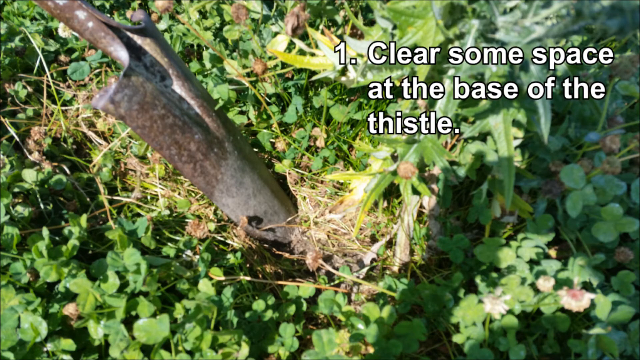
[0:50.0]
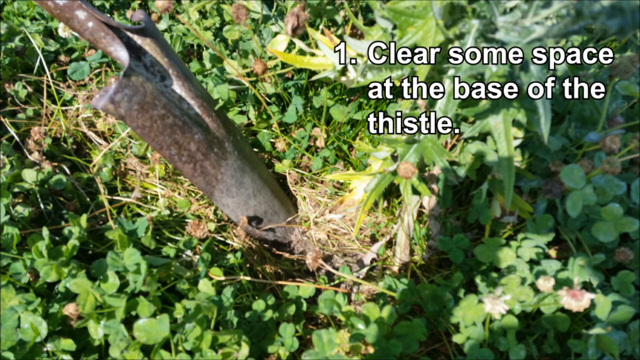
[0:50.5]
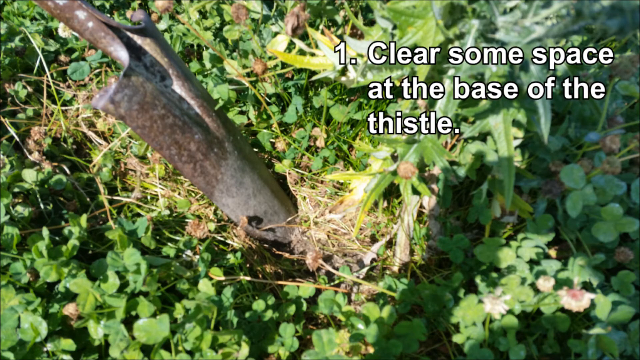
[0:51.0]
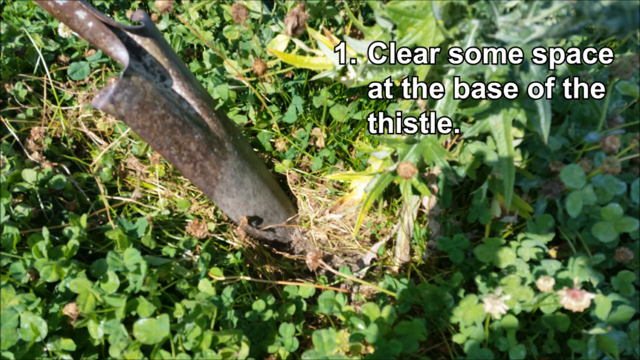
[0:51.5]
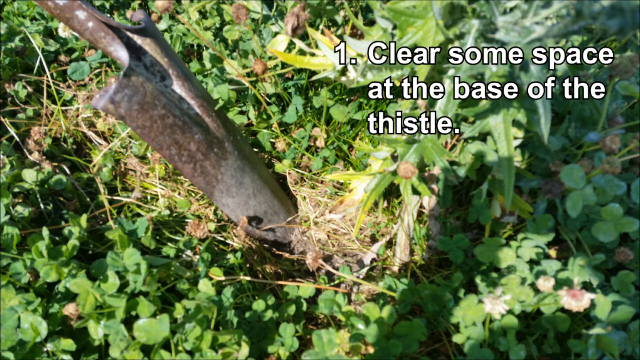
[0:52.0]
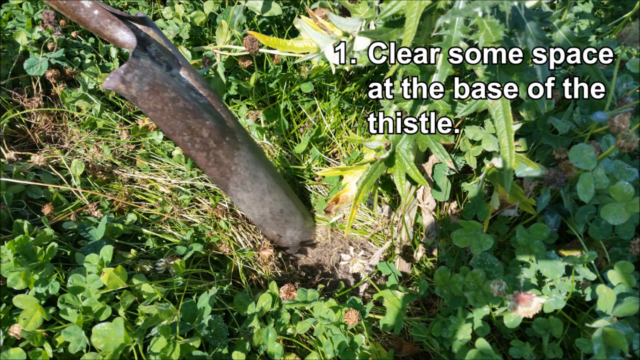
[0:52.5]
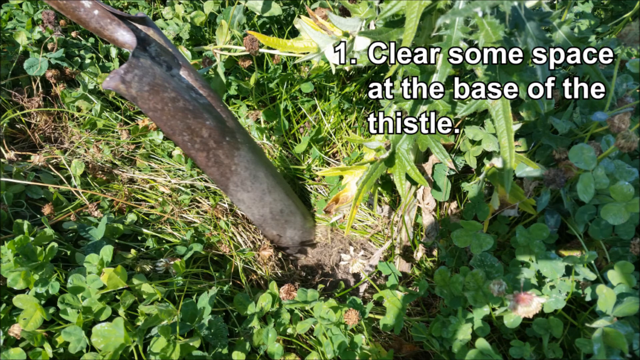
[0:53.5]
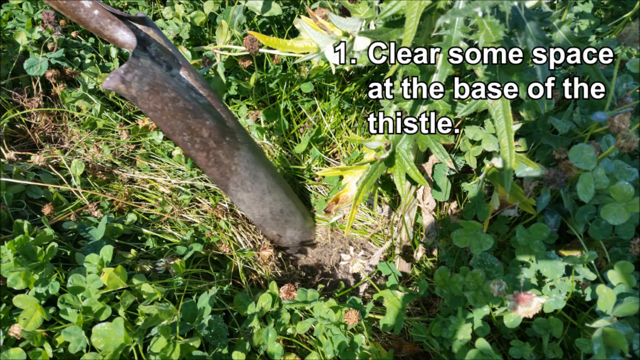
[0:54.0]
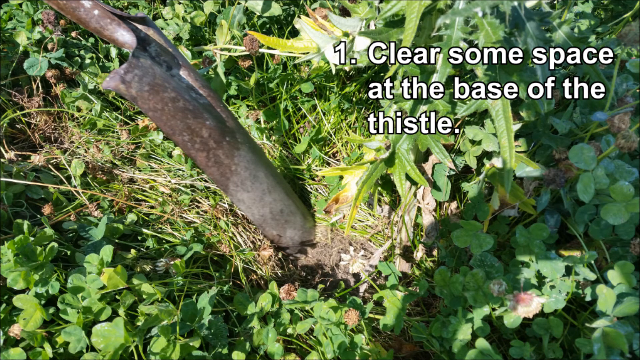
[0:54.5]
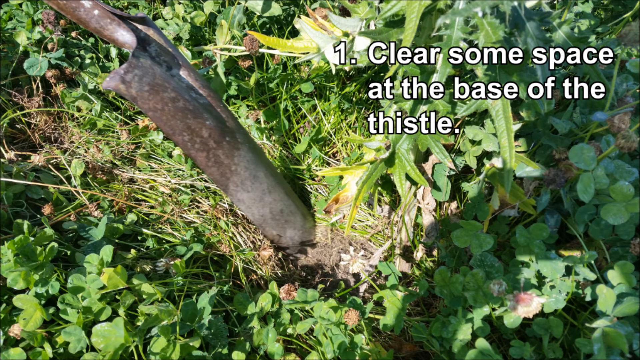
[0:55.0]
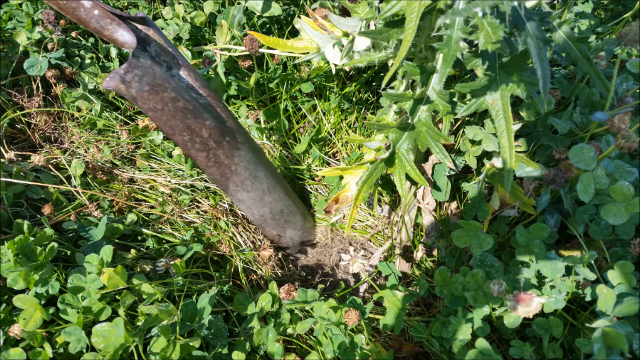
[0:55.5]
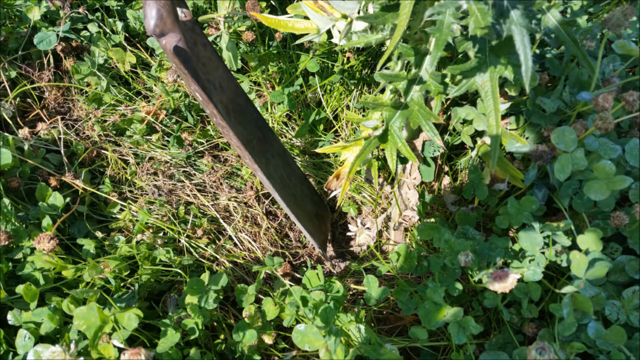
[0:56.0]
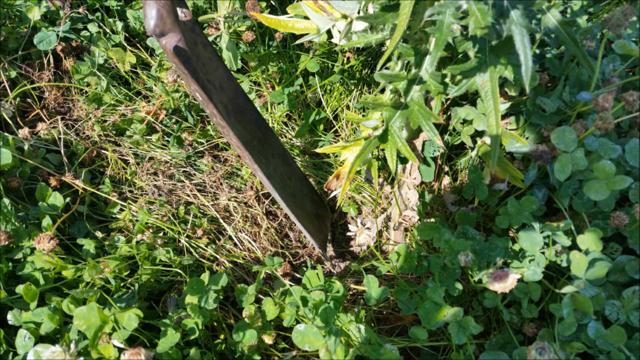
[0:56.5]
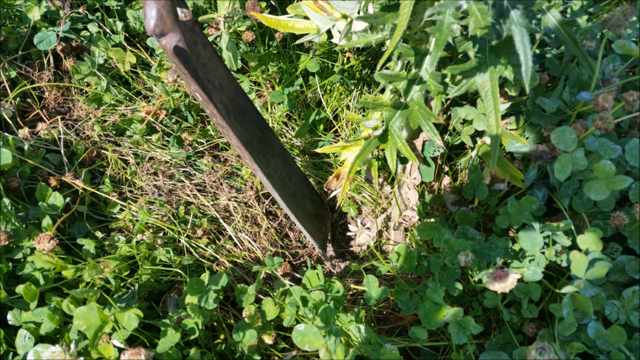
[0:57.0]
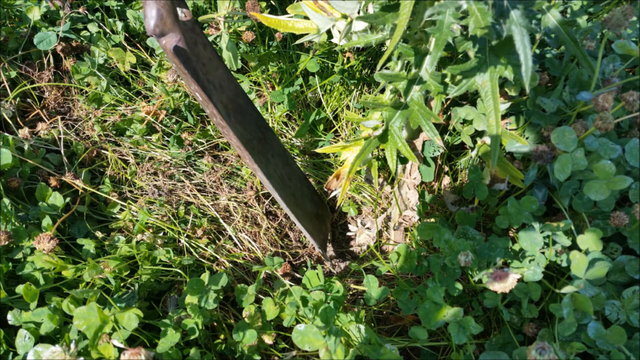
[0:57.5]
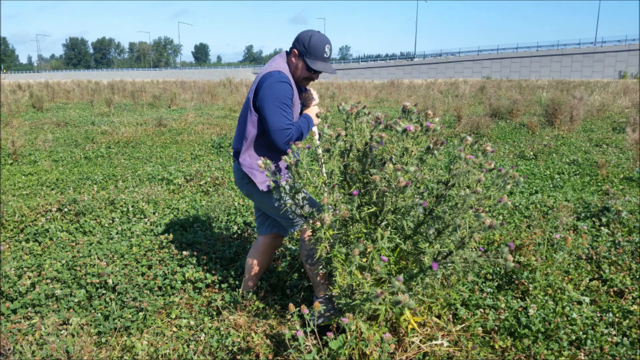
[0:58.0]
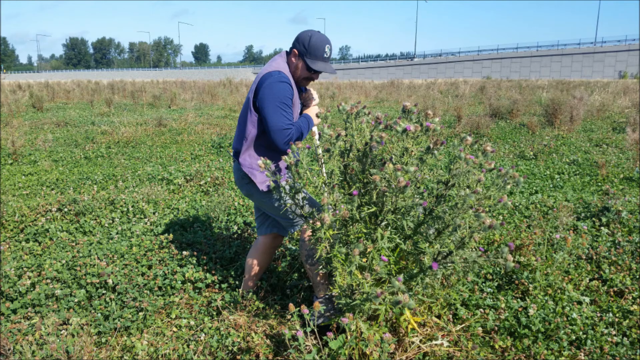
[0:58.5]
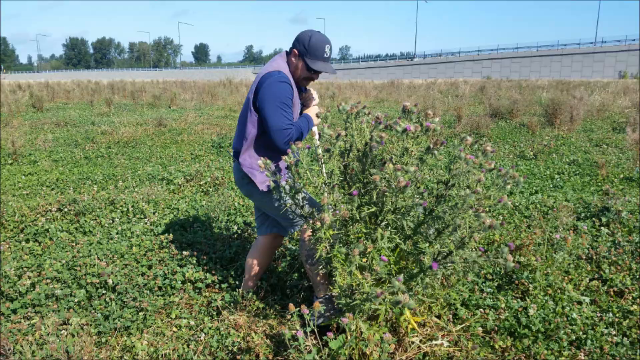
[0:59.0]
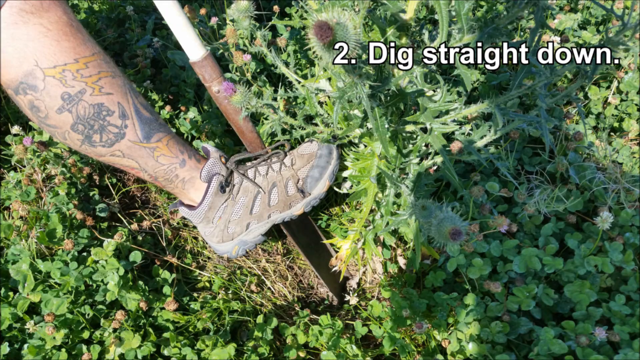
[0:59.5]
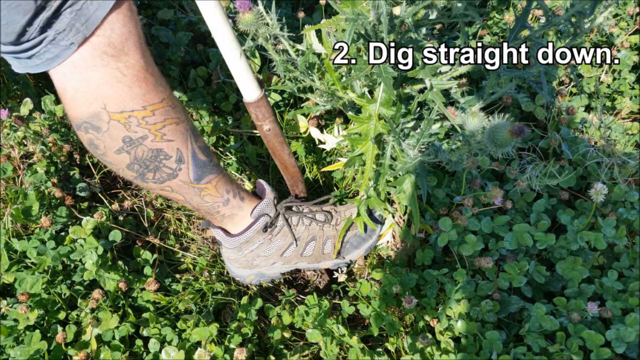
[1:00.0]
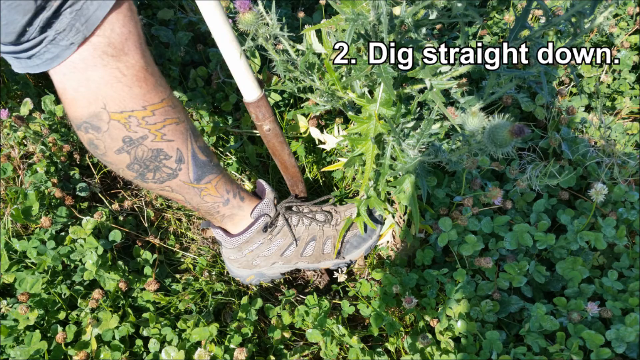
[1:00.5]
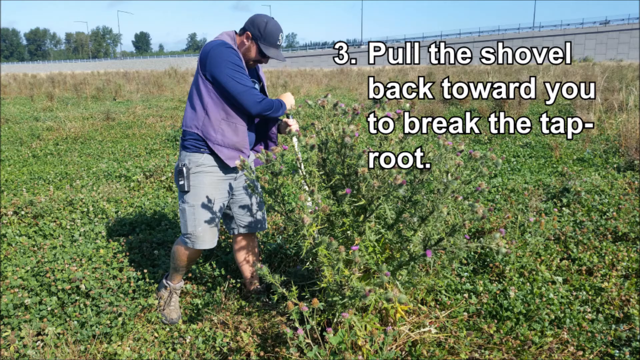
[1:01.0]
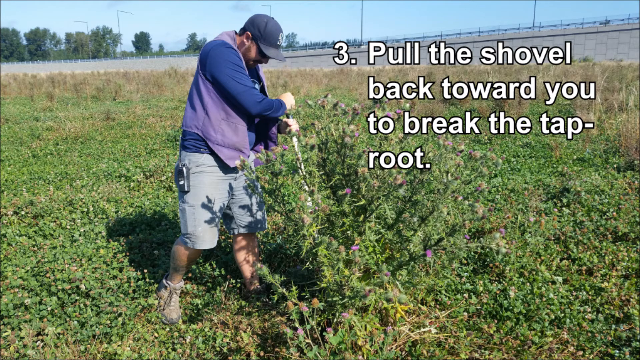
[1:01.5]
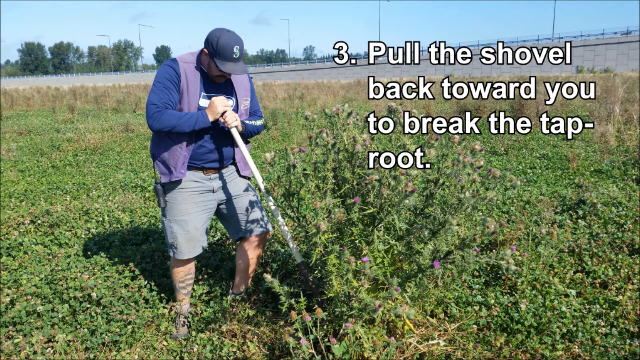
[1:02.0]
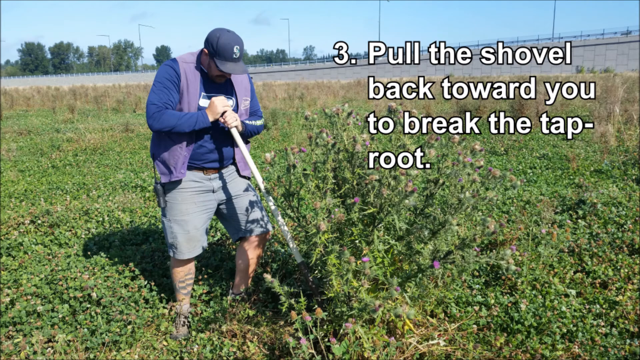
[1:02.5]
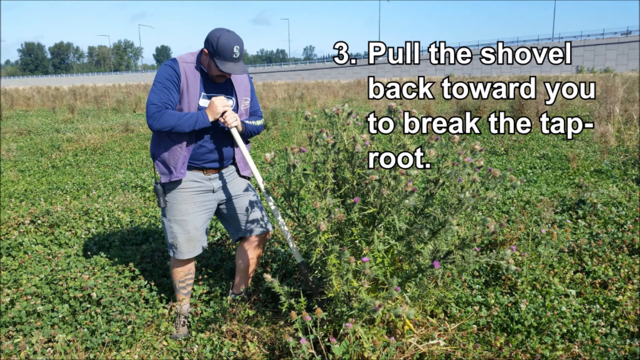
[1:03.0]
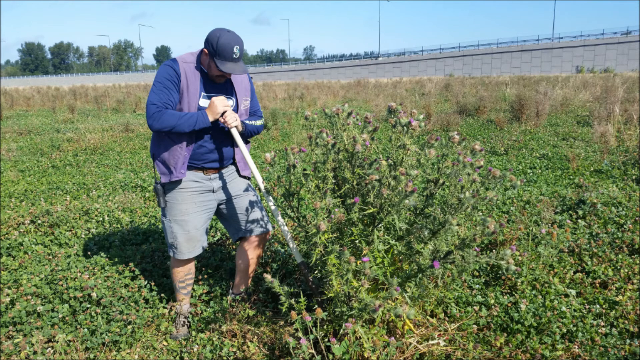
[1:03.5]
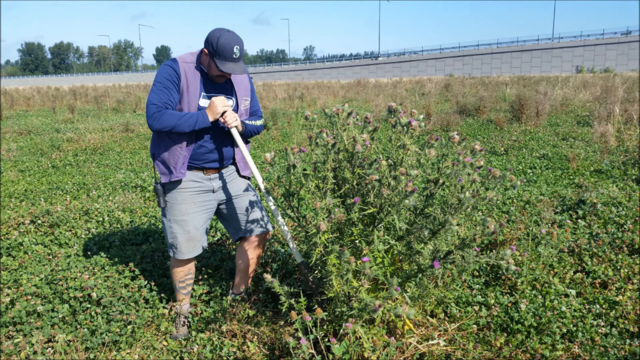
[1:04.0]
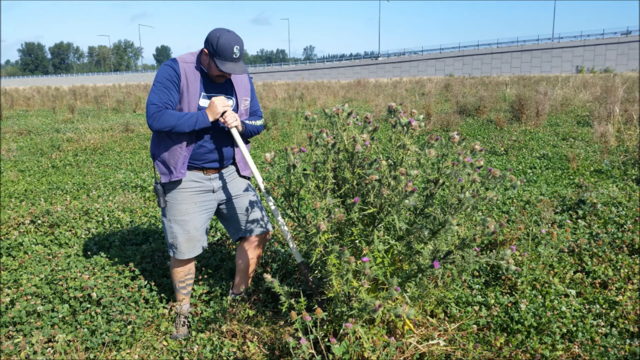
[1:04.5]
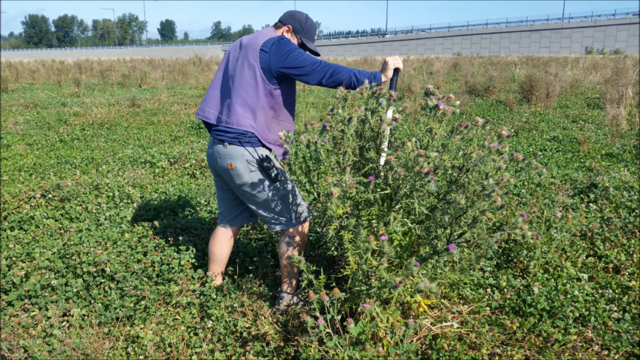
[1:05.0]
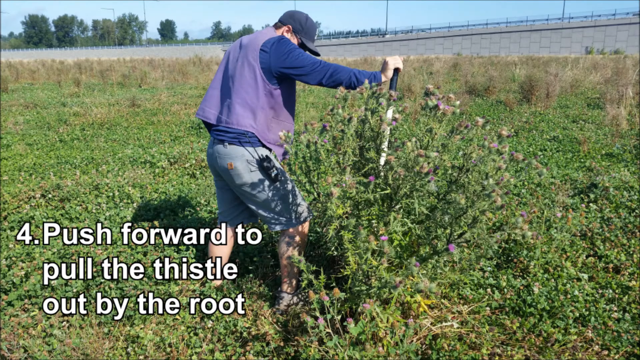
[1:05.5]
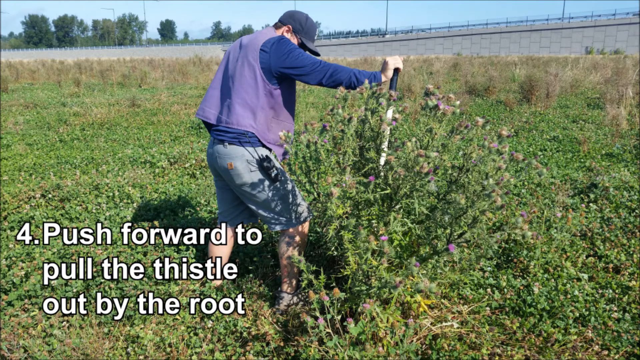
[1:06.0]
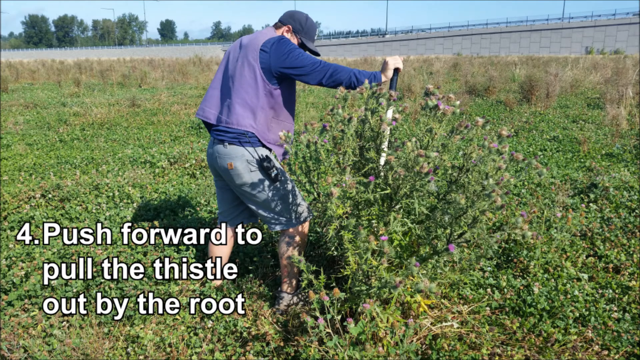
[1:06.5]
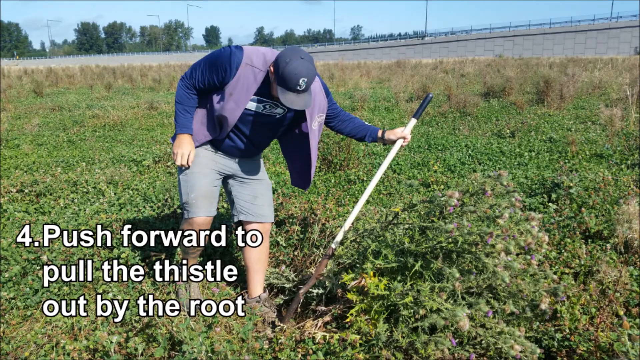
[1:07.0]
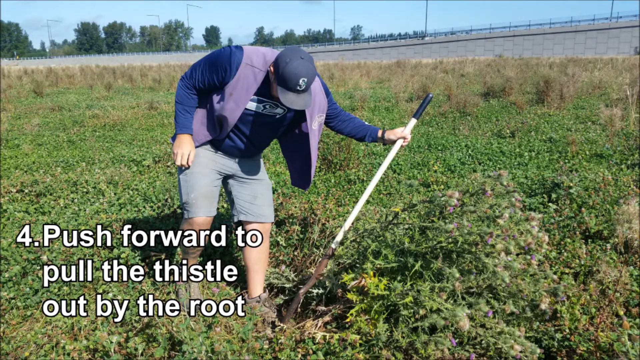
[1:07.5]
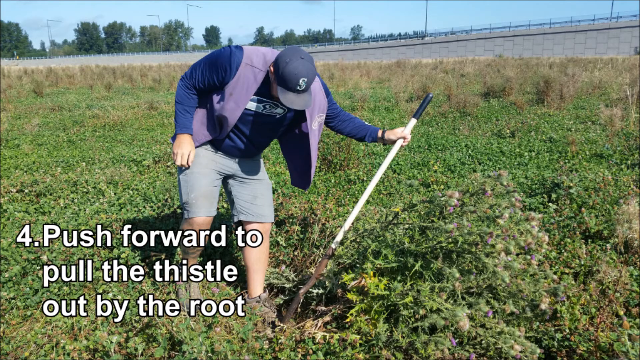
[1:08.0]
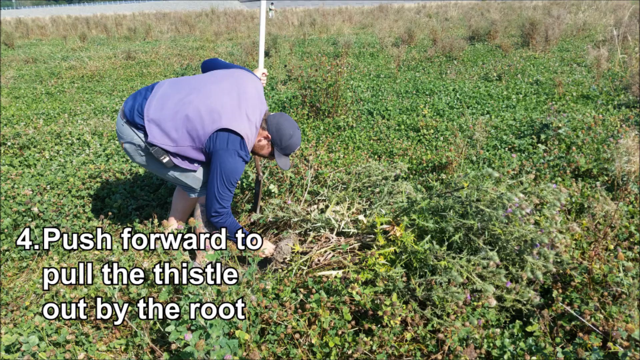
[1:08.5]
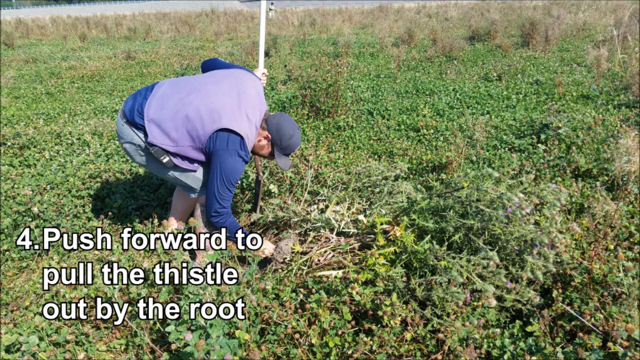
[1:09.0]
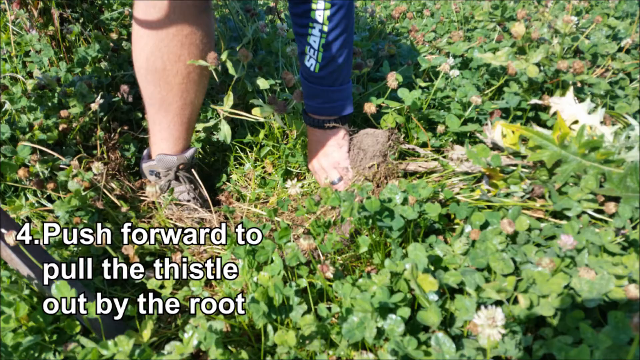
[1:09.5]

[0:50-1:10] The steps for controlling the plant are laid out in order. First step: create some space at the base of the tissue, clearing the surrounding area so the base of the plant can be seen. Second step: dig straight down, not forward. Third step: pull the shovel back toward you to break the taproot. Fourth step: push forward to pull the tissue out by the root.